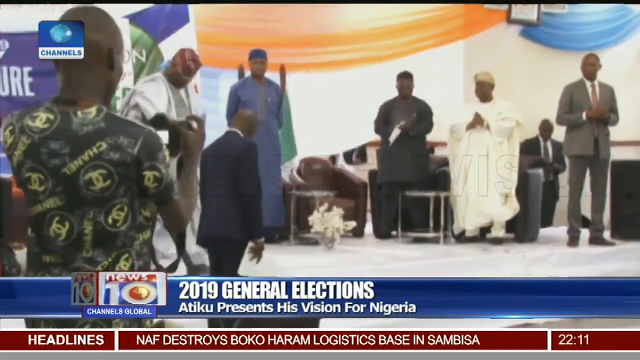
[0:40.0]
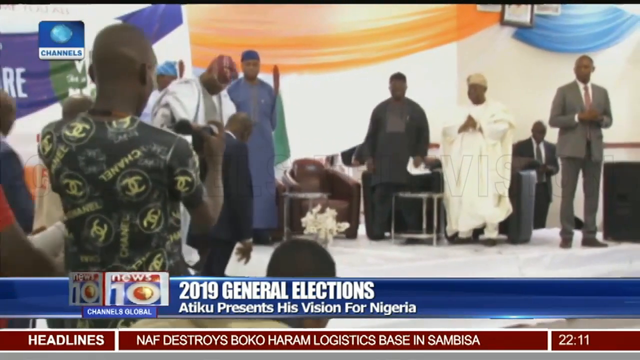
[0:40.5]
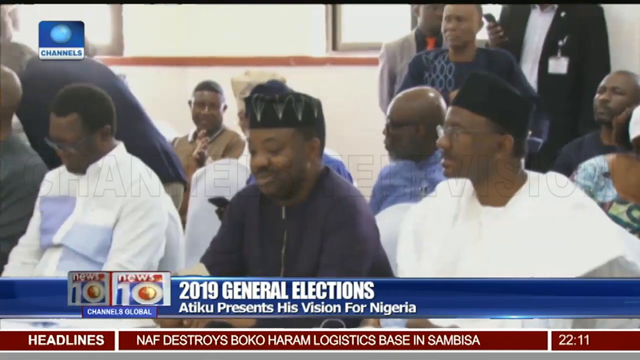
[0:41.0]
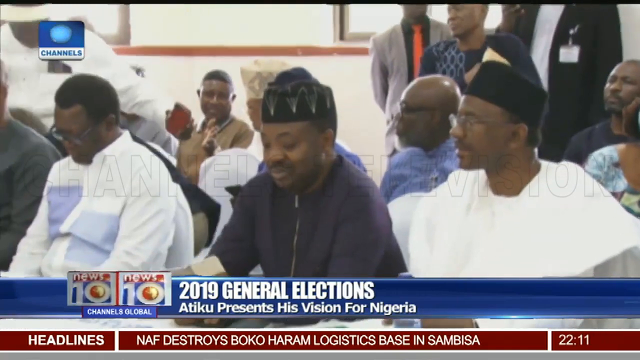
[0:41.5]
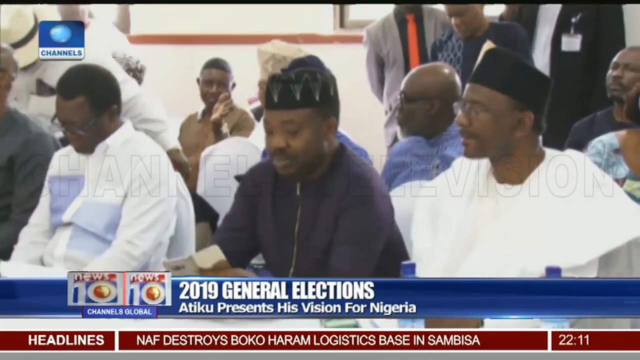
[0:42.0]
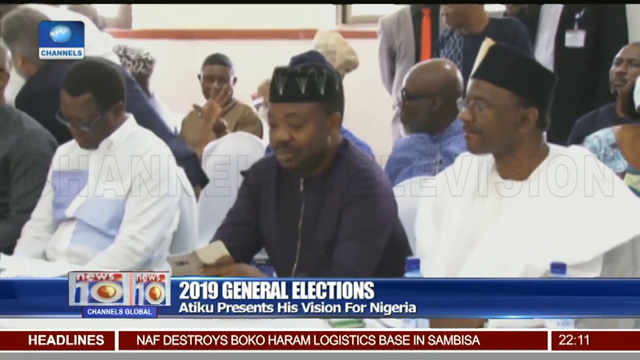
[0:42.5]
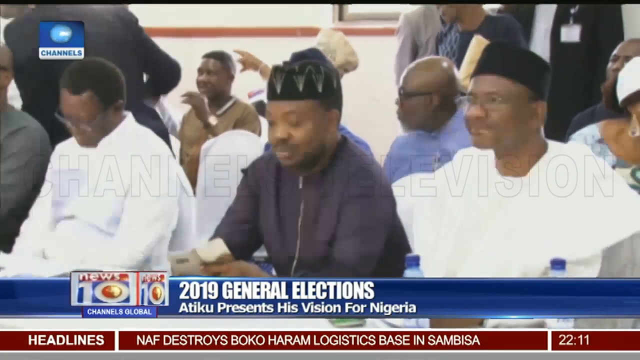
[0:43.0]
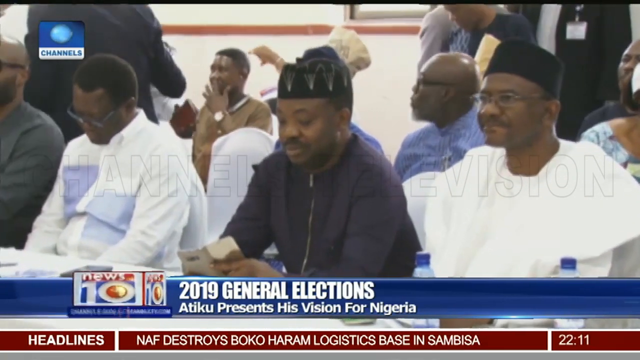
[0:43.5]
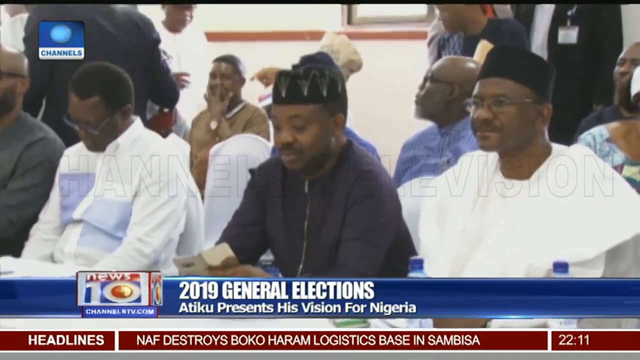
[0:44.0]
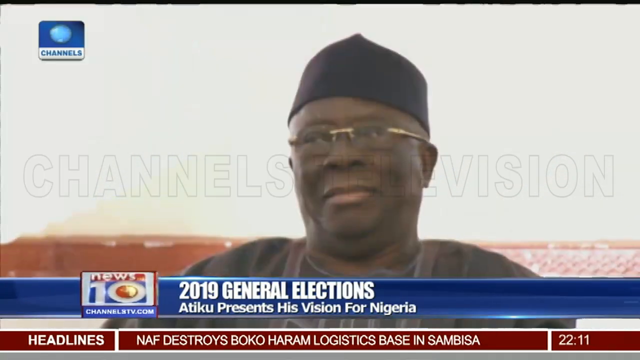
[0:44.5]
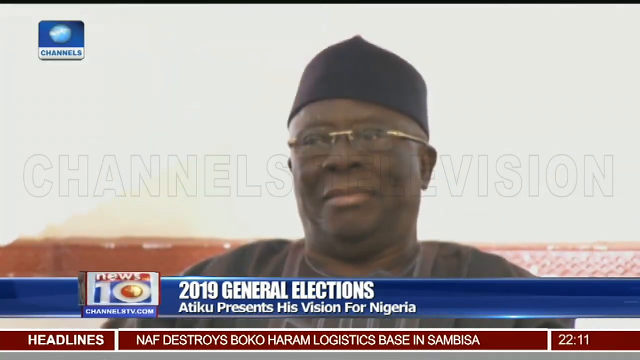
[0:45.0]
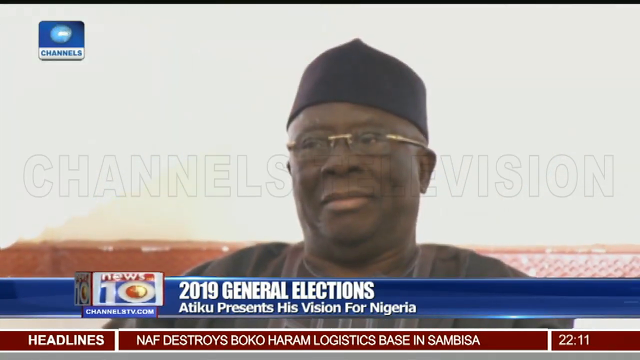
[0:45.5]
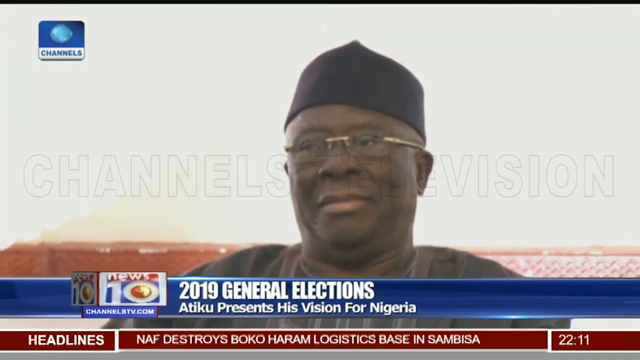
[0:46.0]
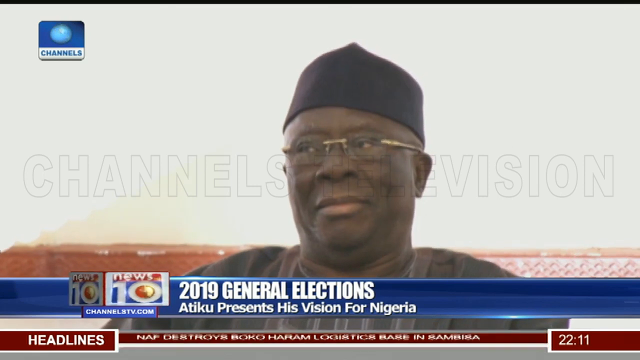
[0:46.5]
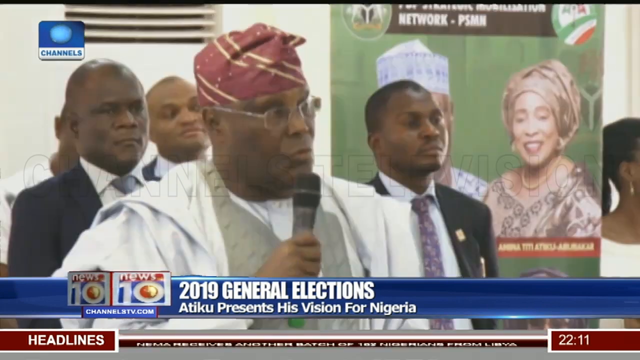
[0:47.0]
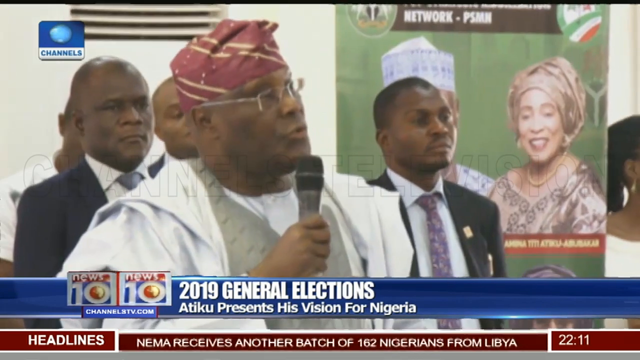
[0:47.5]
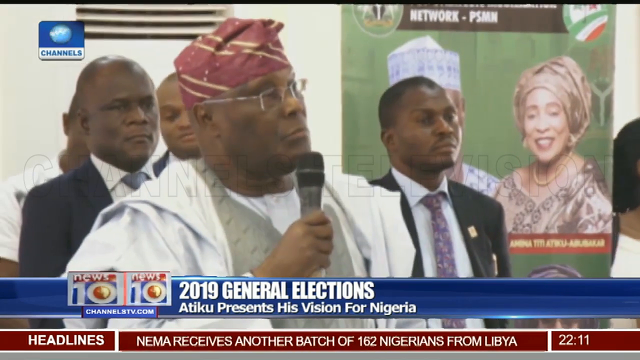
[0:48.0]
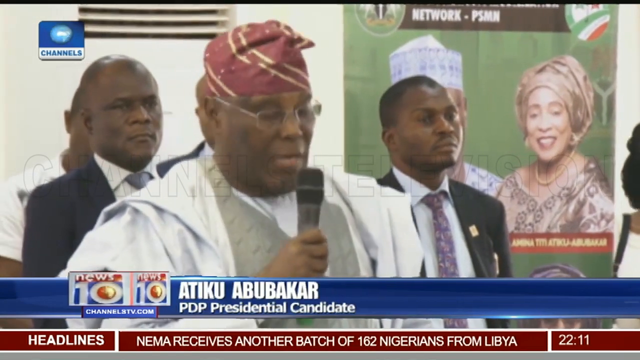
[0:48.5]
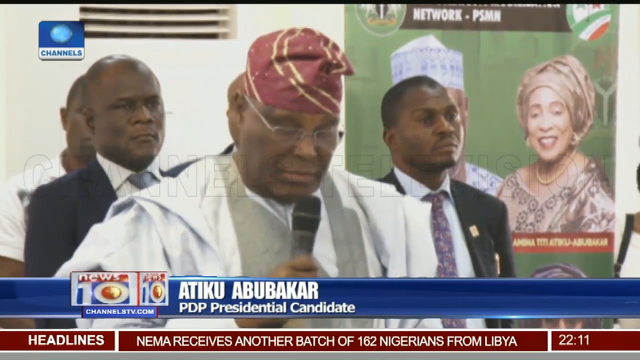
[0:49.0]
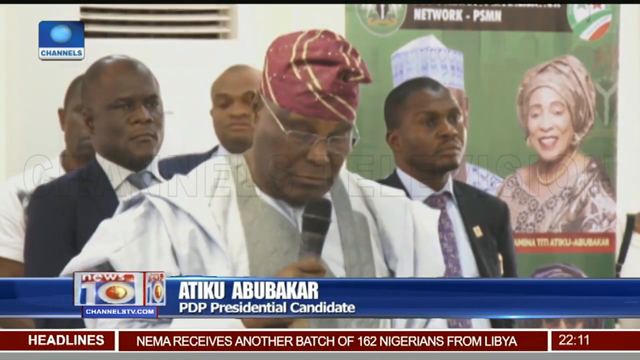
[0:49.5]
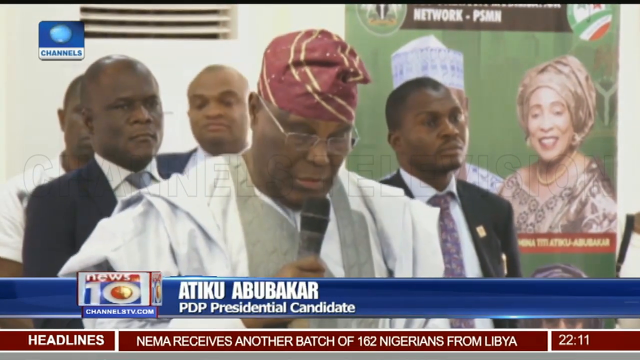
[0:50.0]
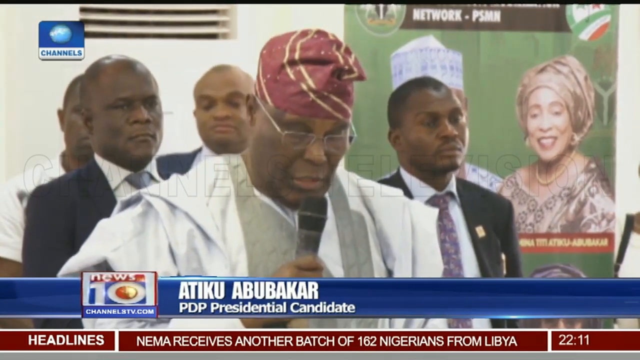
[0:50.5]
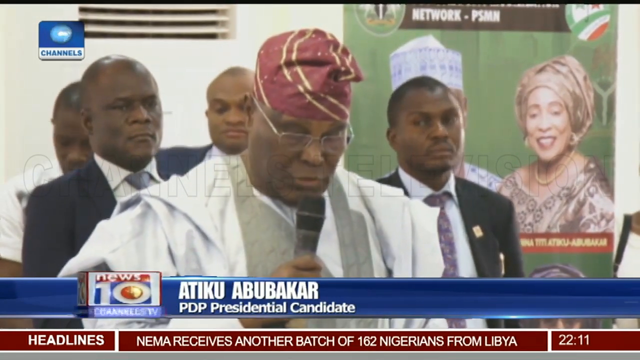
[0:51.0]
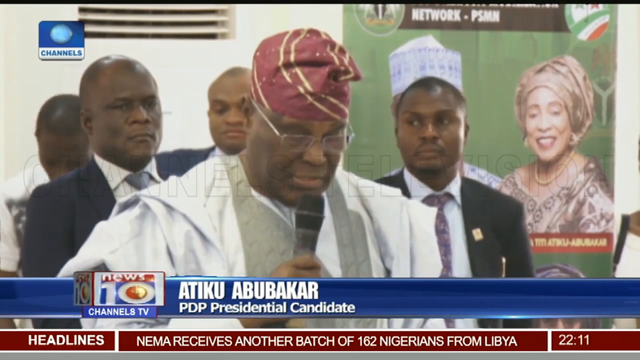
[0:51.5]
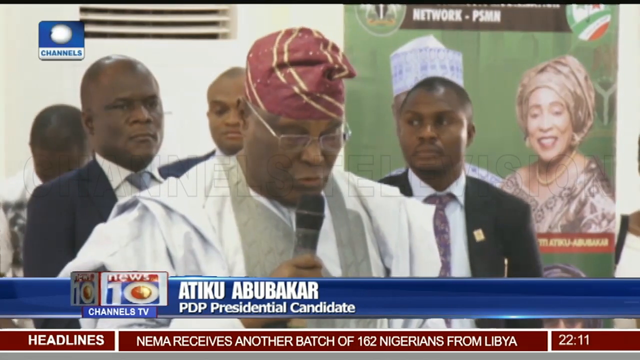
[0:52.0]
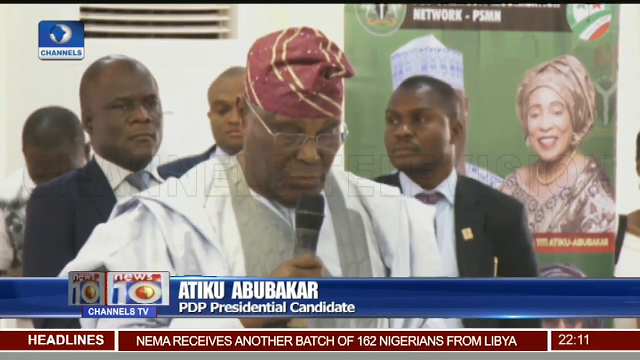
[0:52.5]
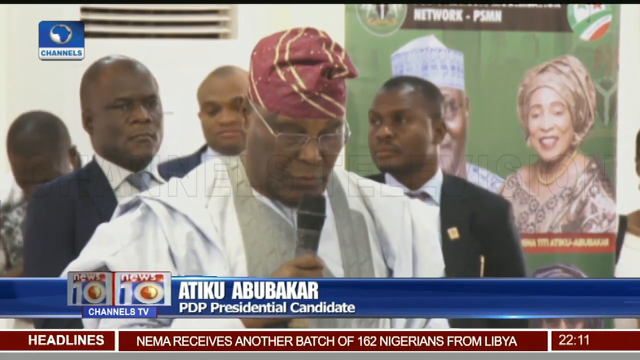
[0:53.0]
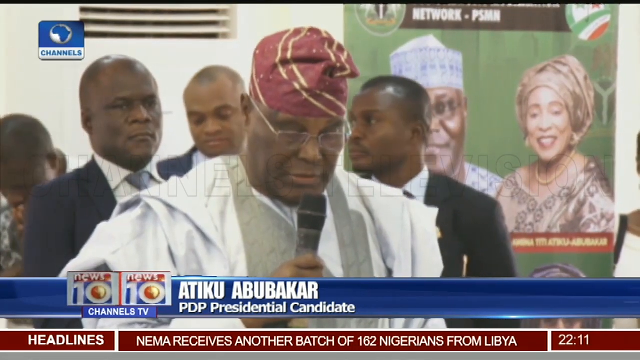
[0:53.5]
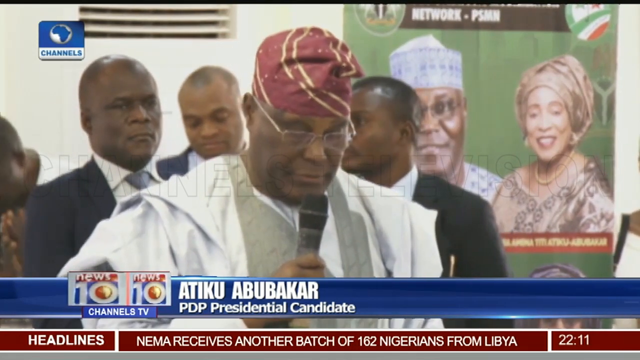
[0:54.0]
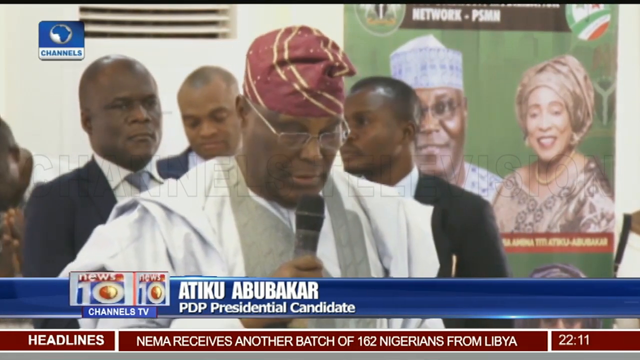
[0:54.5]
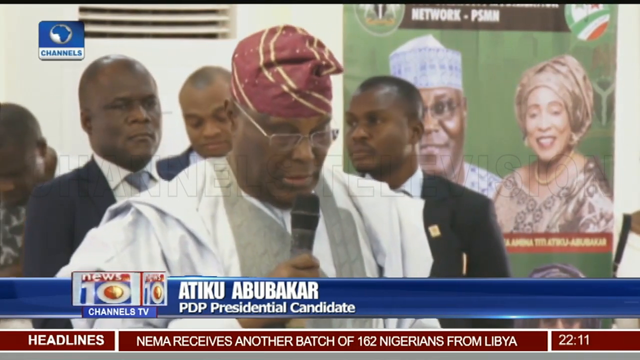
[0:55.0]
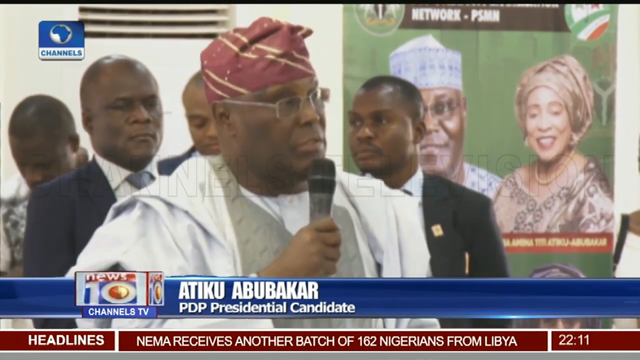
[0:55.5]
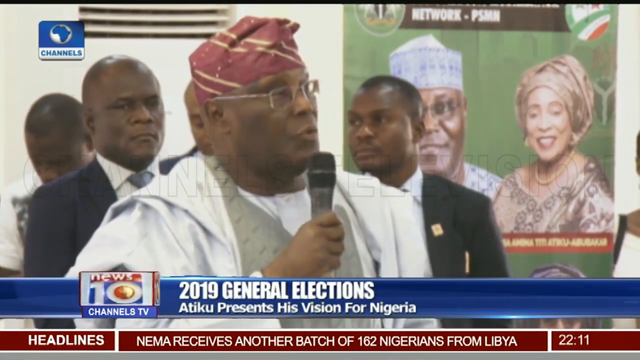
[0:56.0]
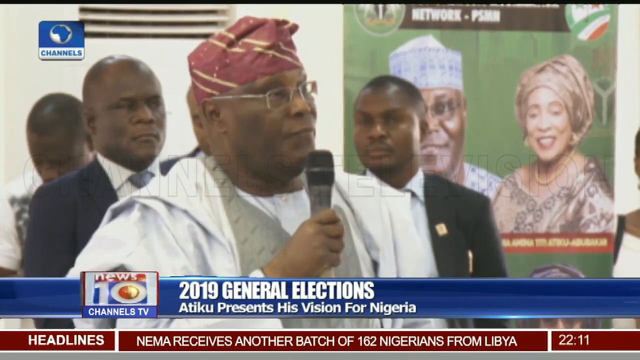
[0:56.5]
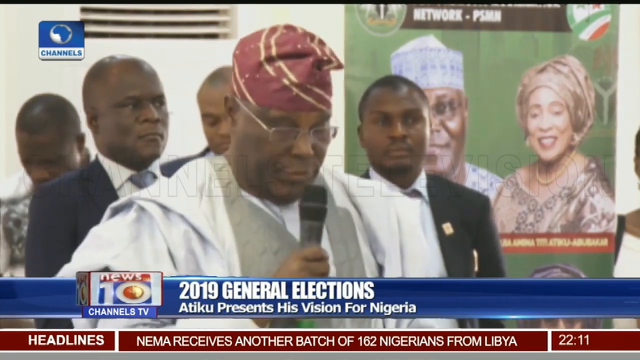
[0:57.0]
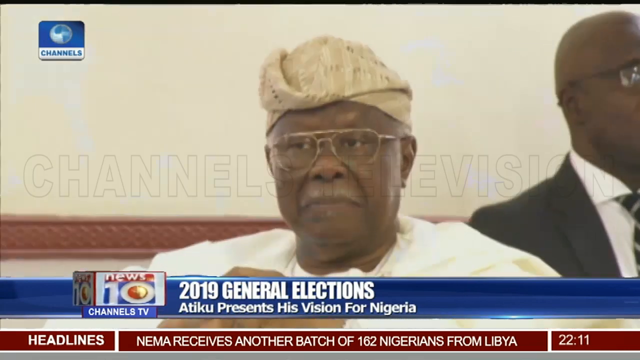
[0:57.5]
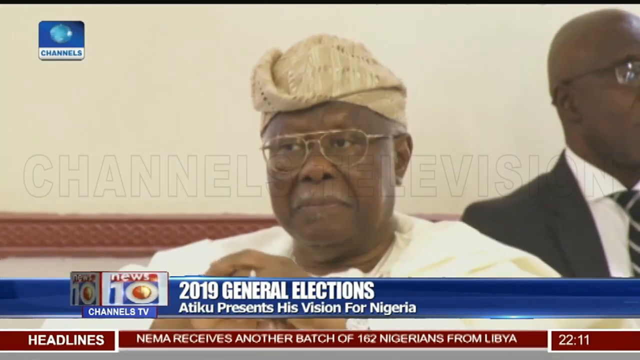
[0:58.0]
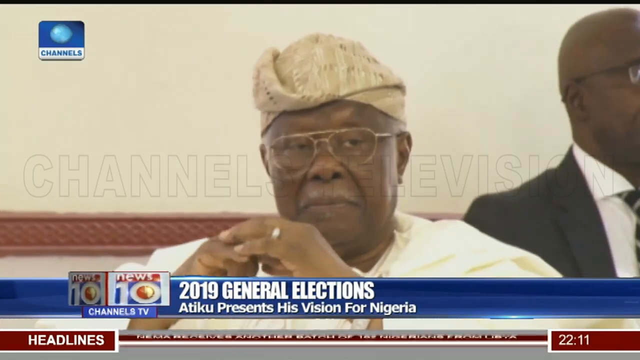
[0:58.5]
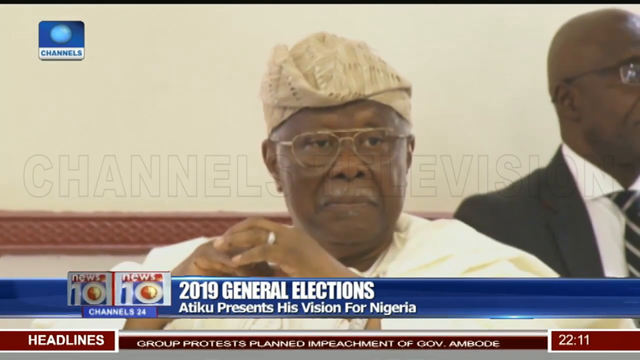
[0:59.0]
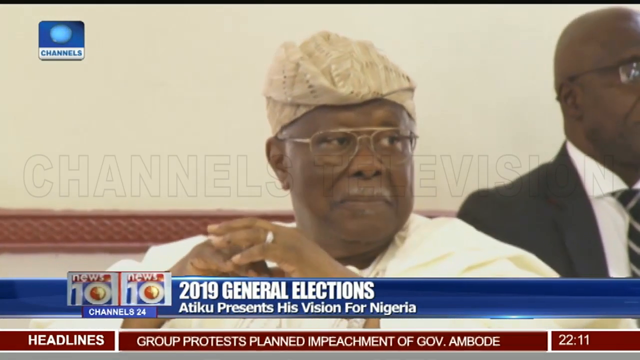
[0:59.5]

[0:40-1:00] A man, Atiku Apakari, gives the first speech; he seems to be looking for votes. A wall is covered with a white sheet decorated with orange, blue and green sheets. A man wears what looks like a camouflage t-shirt; he is the cameraman recording everything.